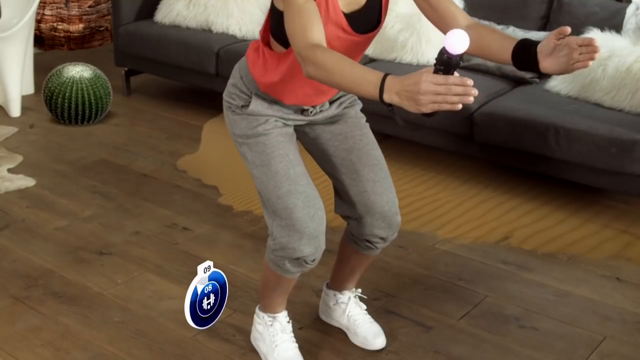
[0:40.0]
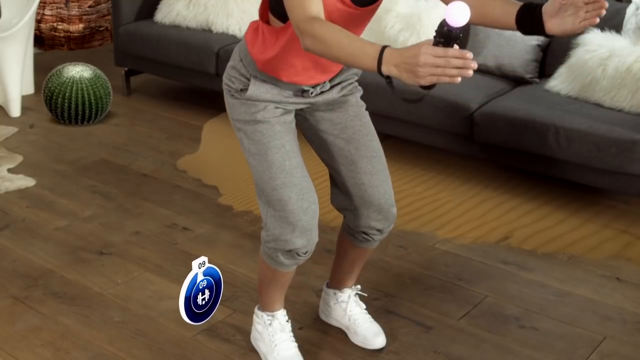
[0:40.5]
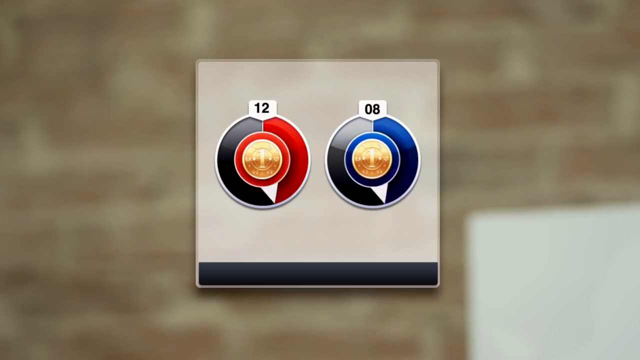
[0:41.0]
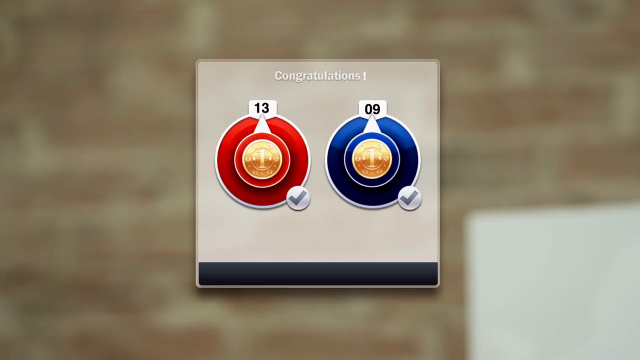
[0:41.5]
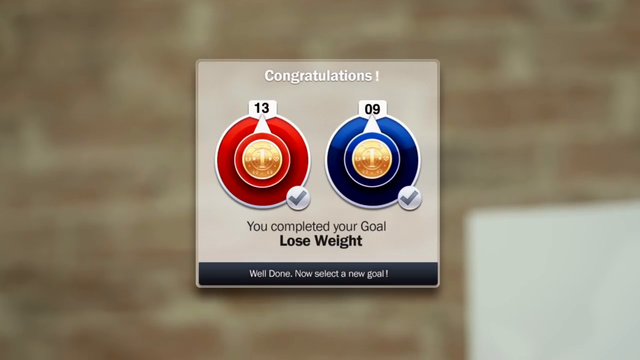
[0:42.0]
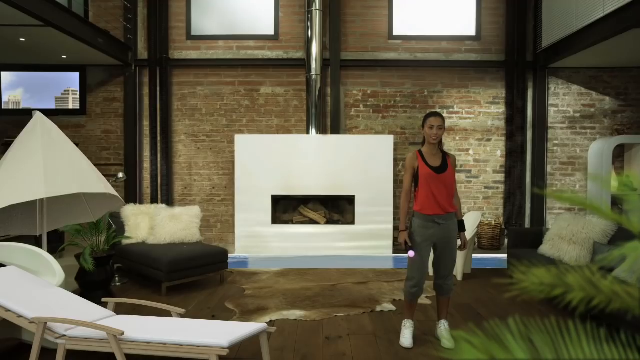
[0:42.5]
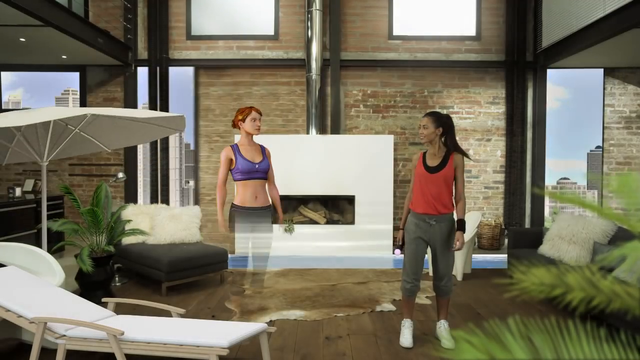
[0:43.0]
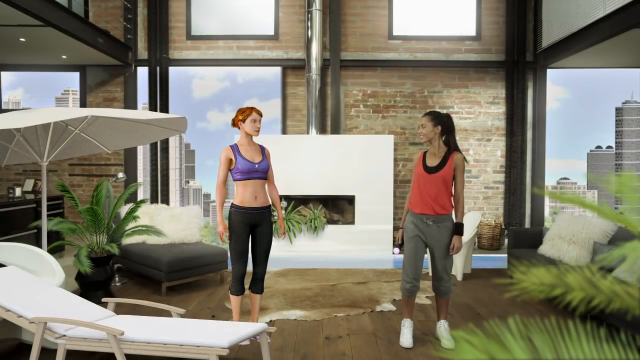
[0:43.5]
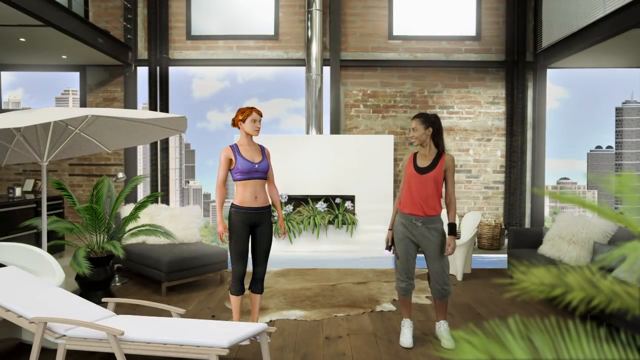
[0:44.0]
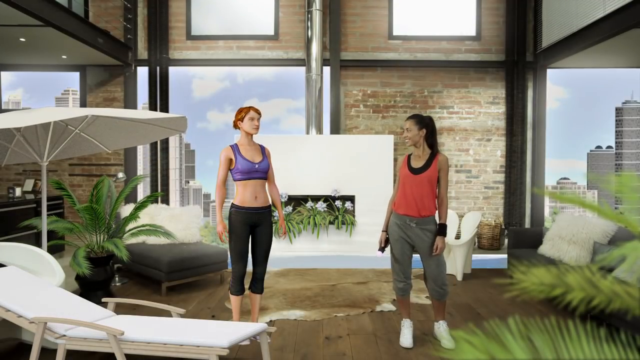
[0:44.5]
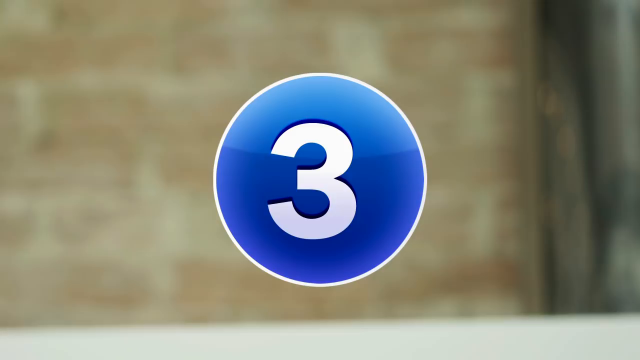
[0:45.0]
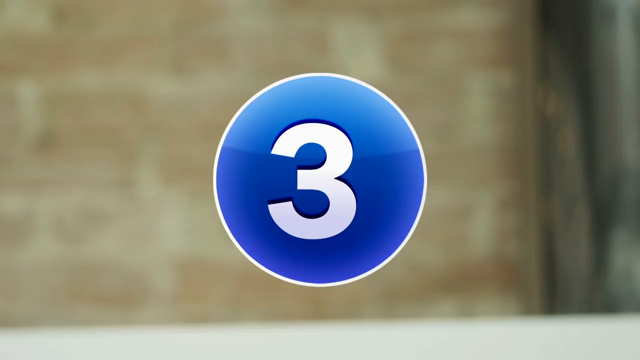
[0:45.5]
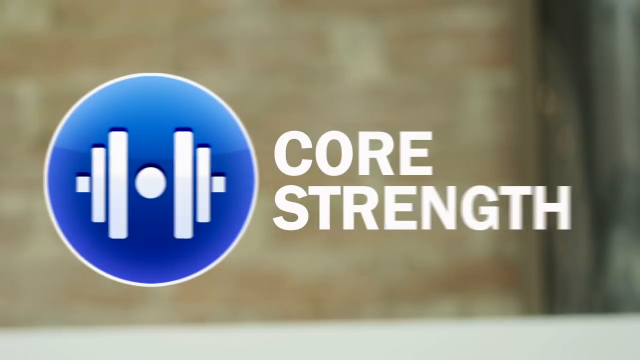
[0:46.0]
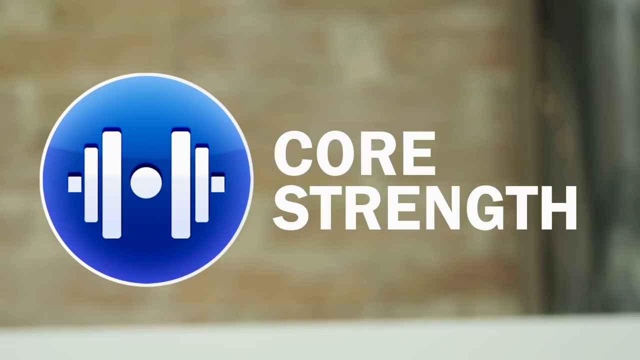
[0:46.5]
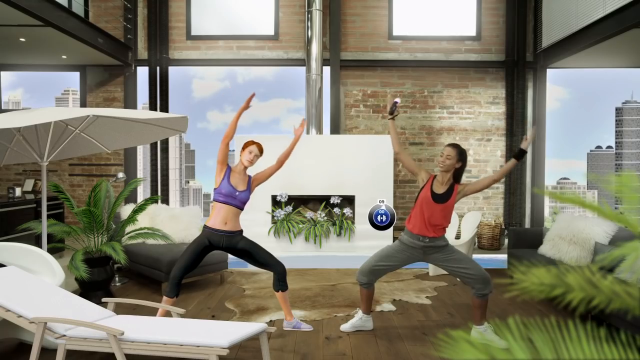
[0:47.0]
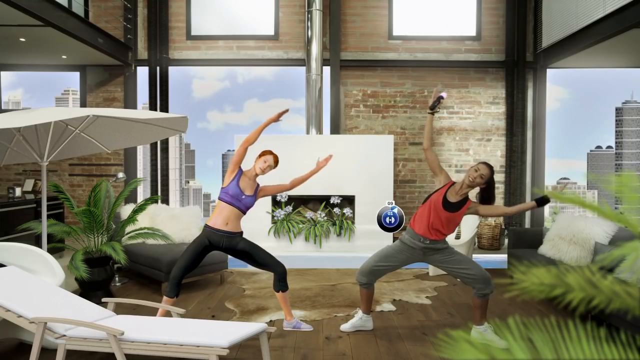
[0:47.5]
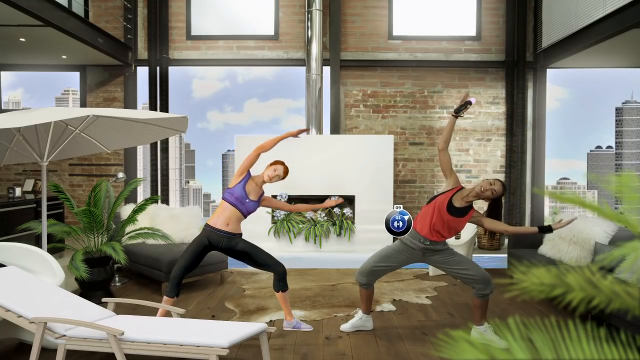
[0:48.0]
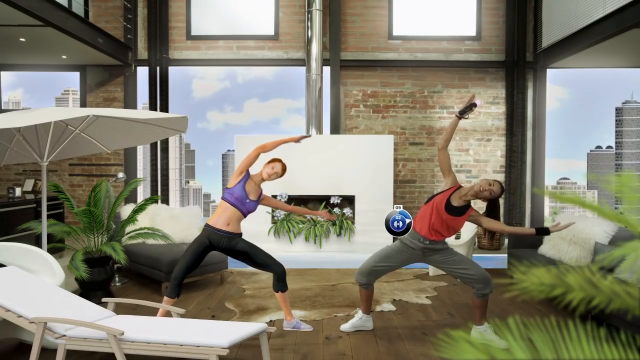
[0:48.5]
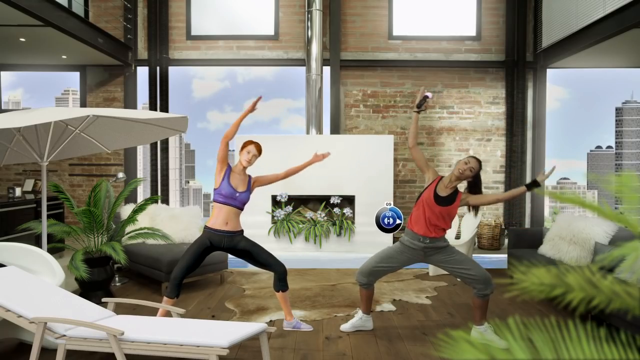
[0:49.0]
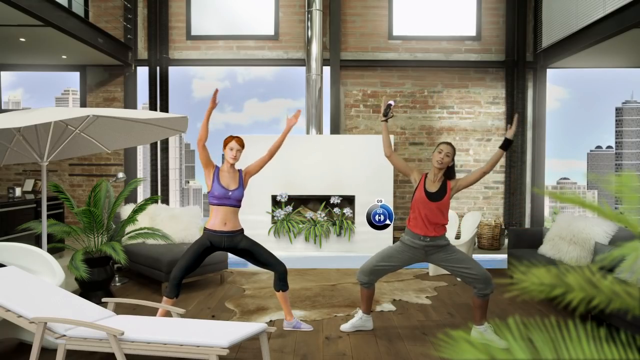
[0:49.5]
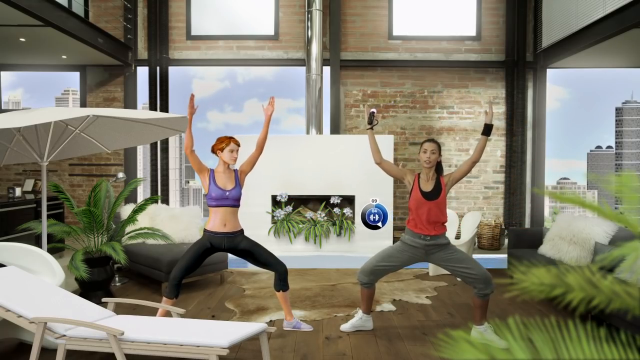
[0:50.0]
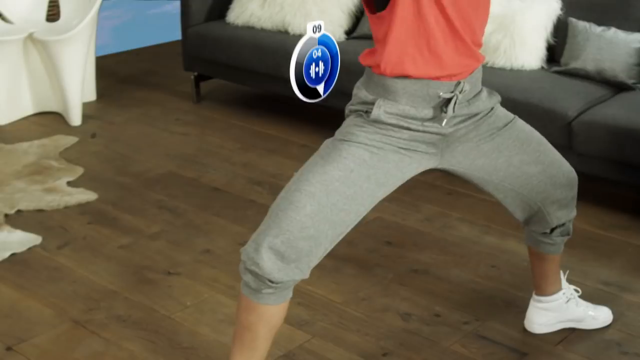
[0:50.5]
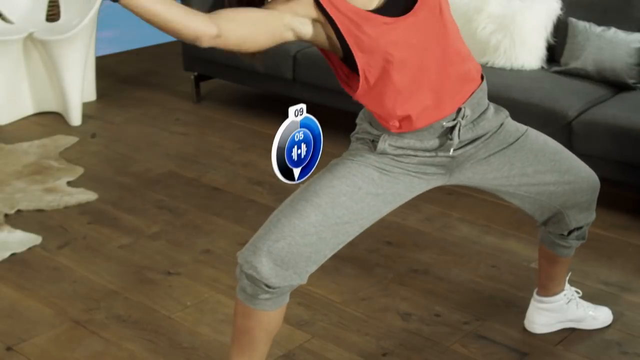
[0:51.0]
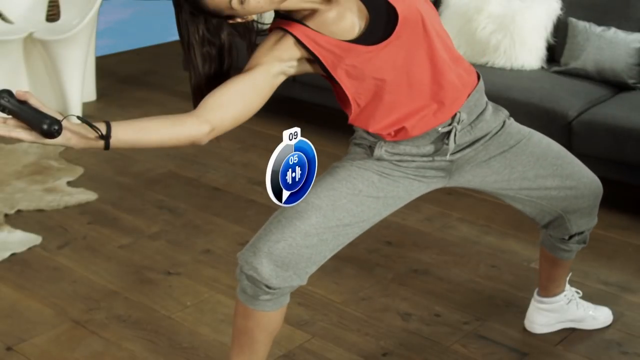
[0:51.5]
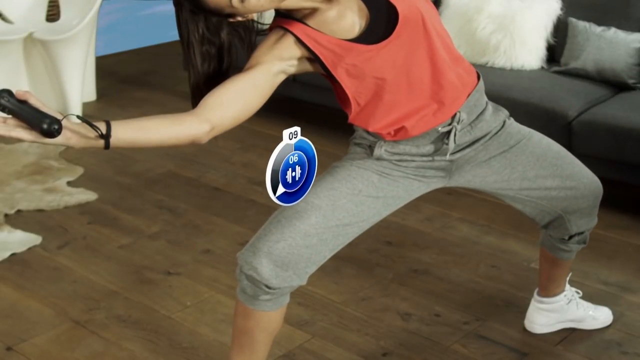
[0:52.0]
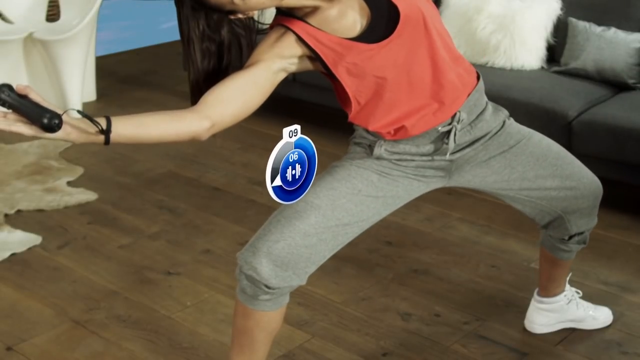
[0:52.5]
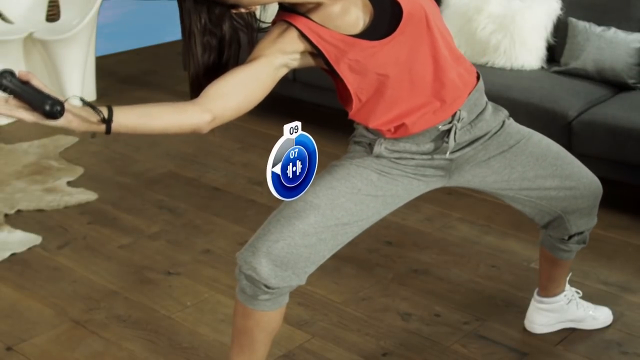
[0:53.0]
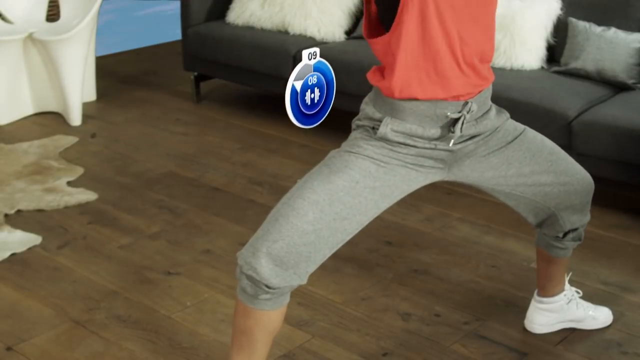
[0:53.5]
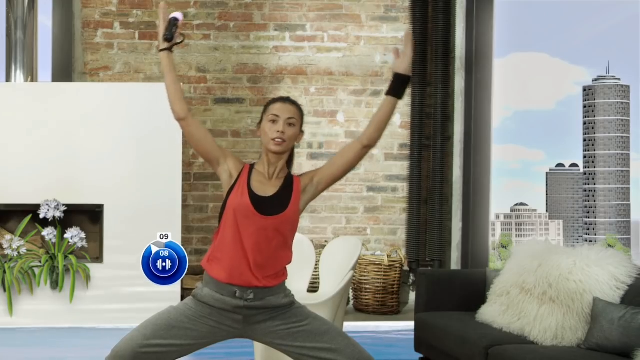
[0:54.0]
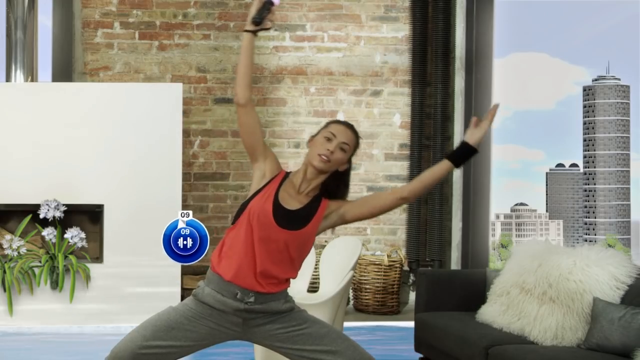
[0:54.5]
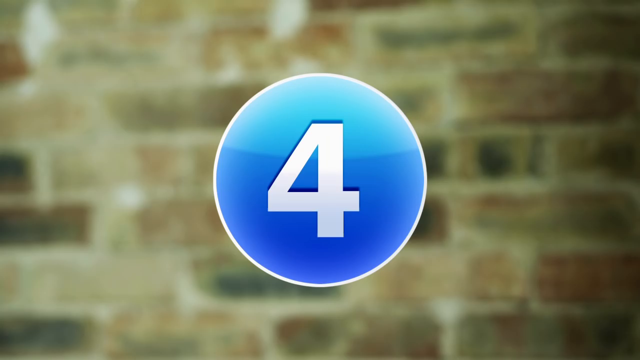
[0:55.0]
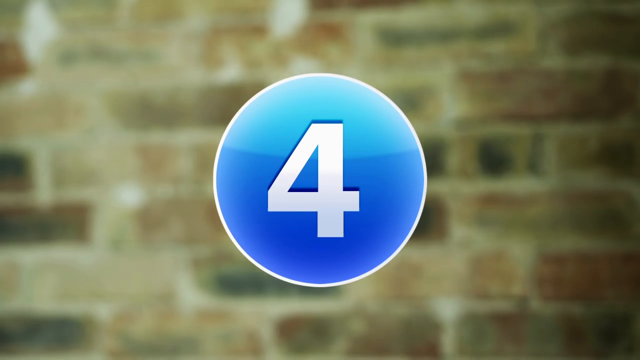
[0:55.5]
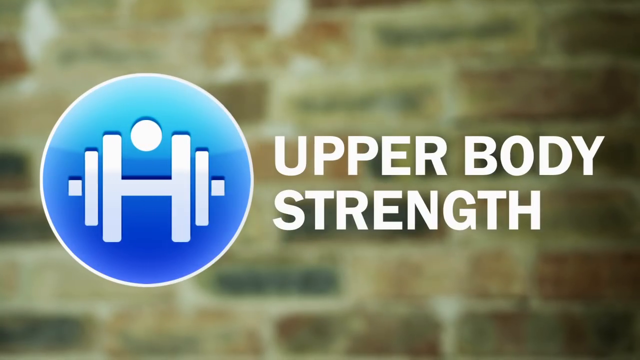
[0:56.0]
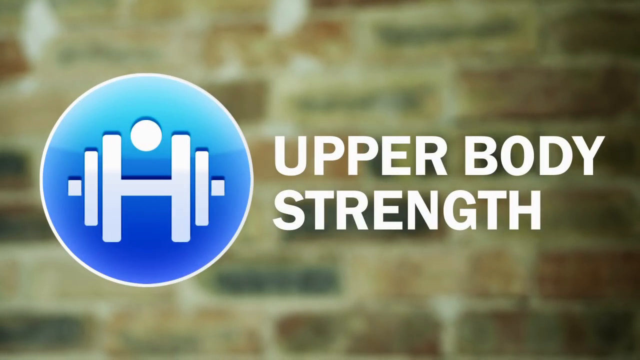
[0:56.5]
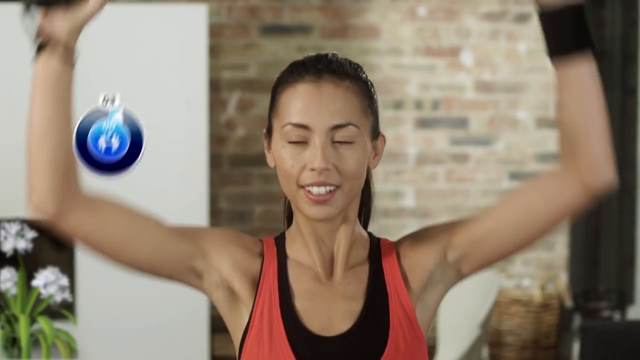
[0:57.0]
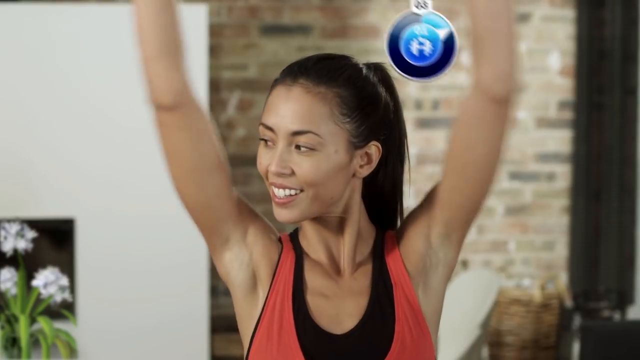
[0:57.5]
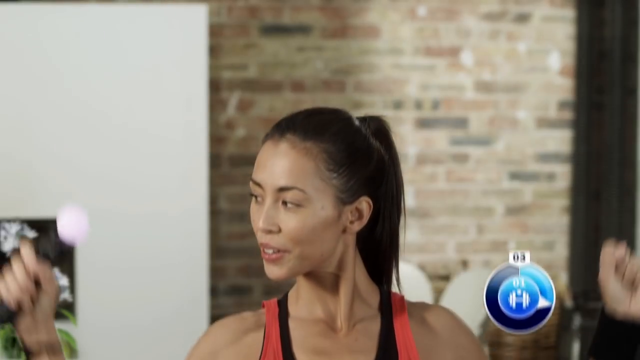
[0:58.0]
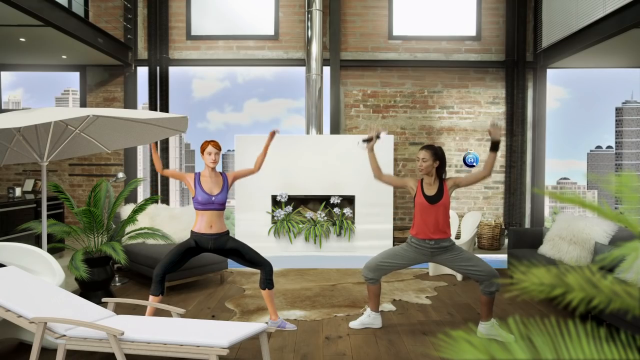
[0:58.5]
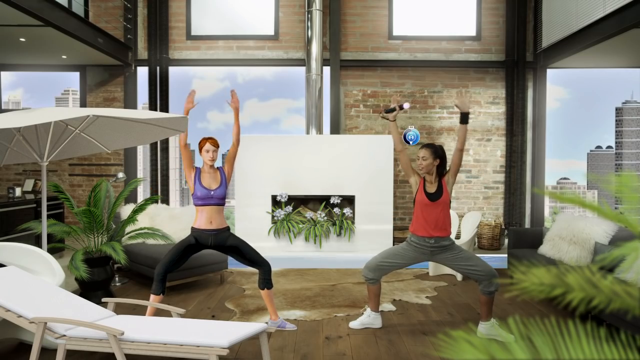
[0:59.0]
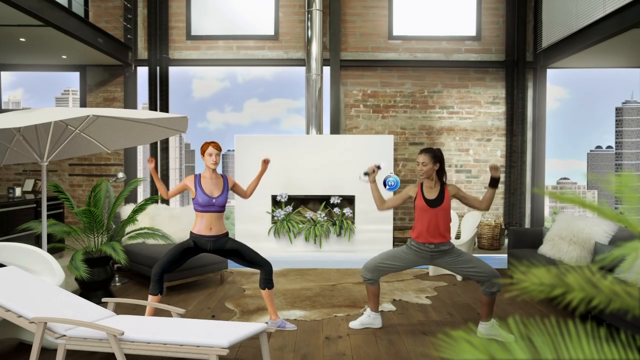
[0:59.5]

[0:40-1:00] A woman does a squat with her arms extended in front of her, holding in her right hand a controller with a long black handle and a white ball on top. Next to her leg is an icon of a blue circle with a sort of meter that goes around, possibly measuring how many sets she has left. The screen changes to a tan box with a red and a blue circle that are meters: the left red circle has the number 13 on top and the blue circle has the number 9. Underneath it says "you completed your goal, lose weight". Back in the living room, the background is changing: it looks like some of the wall panels behind her disappear, revealing the outdoor sky and some tall skyscrapers. Some plants are added to the living room, along with what looks like a pool or deck chair and an umbrella, and a digital woman wearing a blue sports bra and black capri yoga pants pops up. The human woman turns to the digital woman and smiles. A transition screen shows a blue circle with a white number three, the words "core strength" come on the screen, and the blue circle turns into an icon that looks like a blue circle with a dumbbell inside it. In the living room, the two women are stretching, sort of squatting down with their legs spread and both arms straight in the air as they lean over to one side, come back to the middle, and lean over to the other side. A close-up shows the human woman in the wide squatting position leaning over to her right side; underneath her arm is a blue circle icon with an arm sort of going around in a circle. The camera sort of backs up a little for a wider shot of the woman as she stretches in the other direction. A transition screen shows a blue circle with a white number 4, the words "upper body strength" come up, and the blue circle turns into an icon with a dumbbell inside. In the living room, a sort of close-up shows the woman's upper body and head; her arms are up by her shoulders with her elbows bent and her hands sticking up, and in her right hand she holds a controller with a long black handle and a white ball on top. She extends her arms so they are straight next to her ears, then brings them back down with her elbows bent and her hands facing the roof. The camera backs out even more, showing the woman and the digital woman squatted in a wide position in the living room, bending their elbows and then straightening their arms.